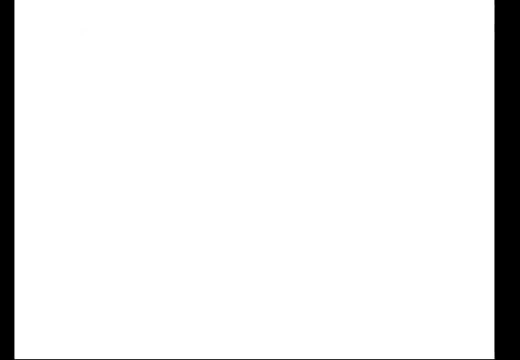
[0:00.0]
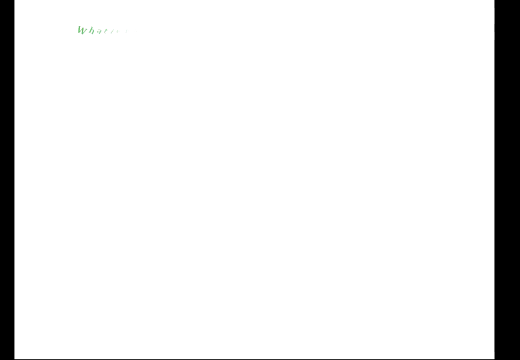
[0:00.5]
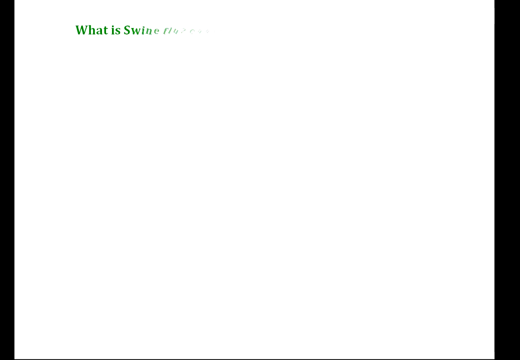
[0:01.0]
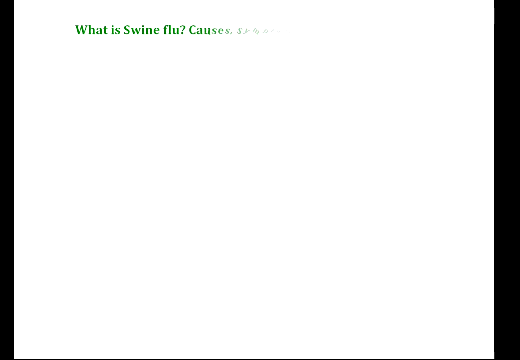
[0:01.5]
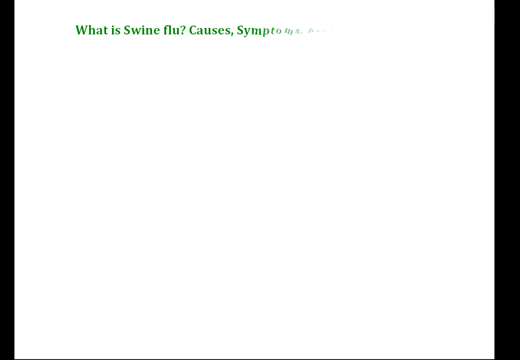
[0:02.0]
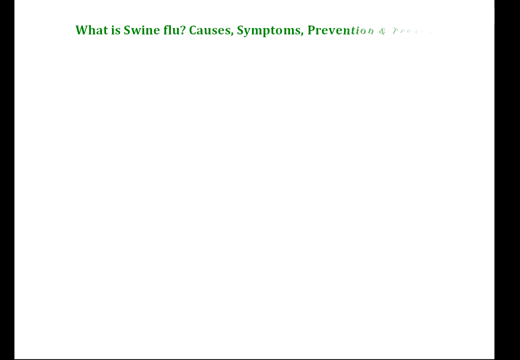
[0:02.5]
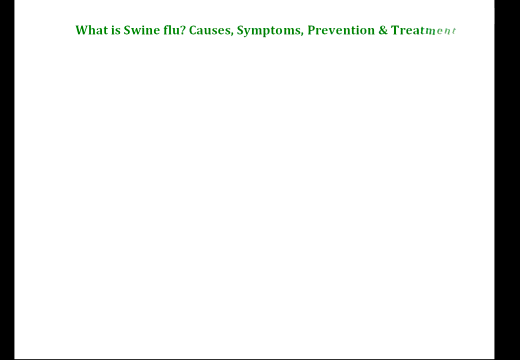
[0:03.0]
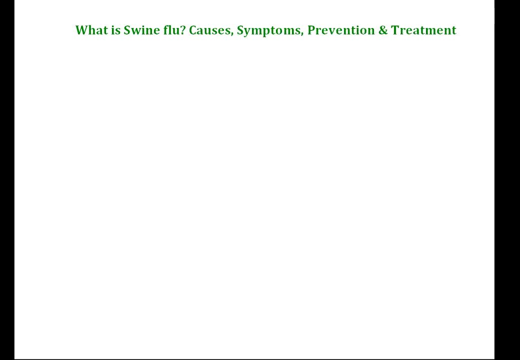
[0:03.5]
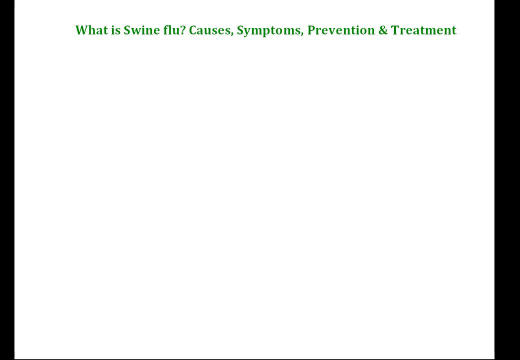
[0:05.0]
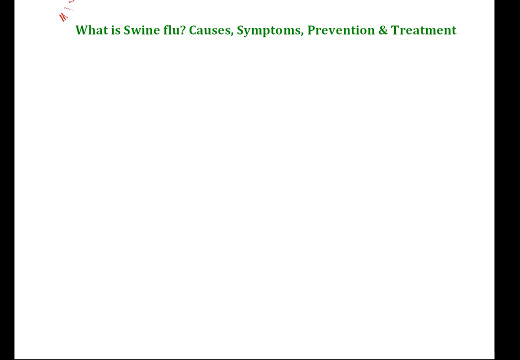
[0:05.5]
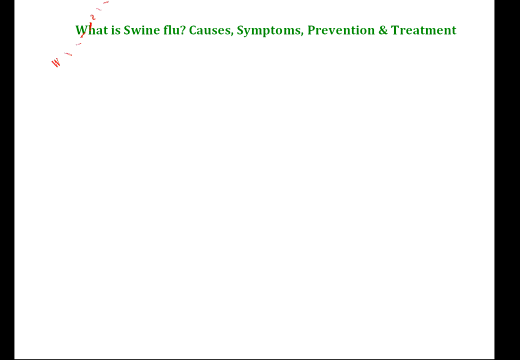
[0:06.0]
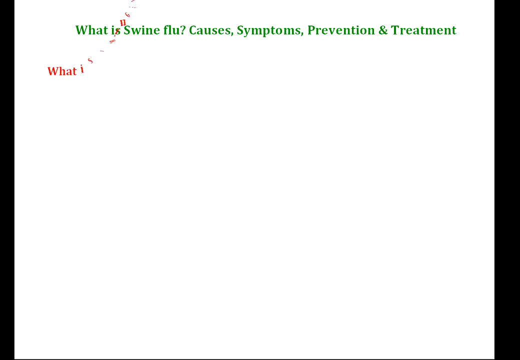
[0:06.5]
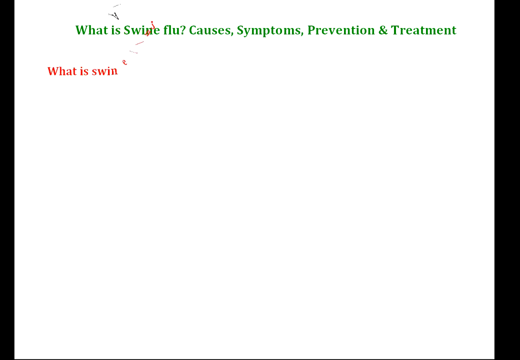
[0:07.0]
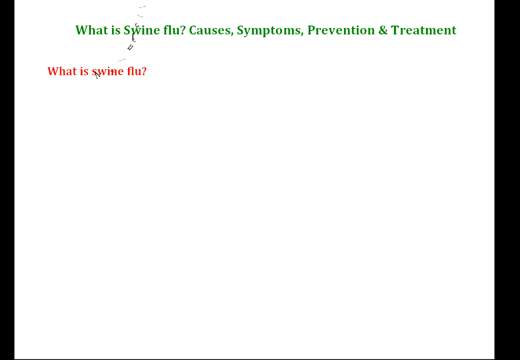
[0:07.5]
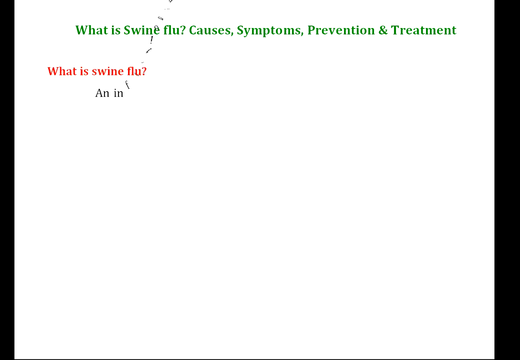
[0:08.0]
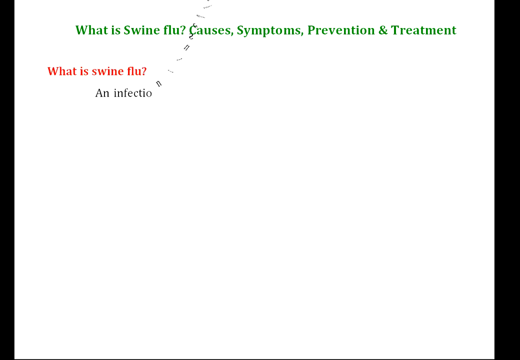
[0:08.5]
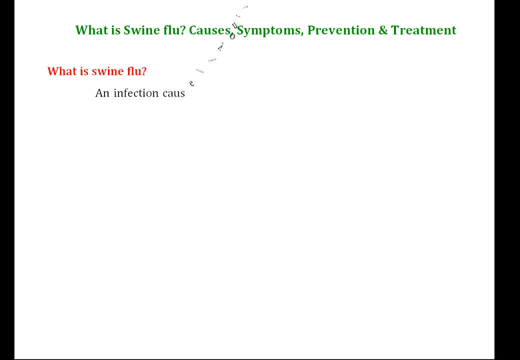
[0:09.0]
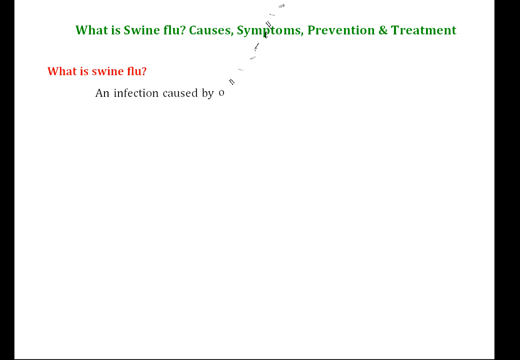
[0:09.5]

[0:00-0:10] A blank white screen appears, and text is added to it gradually, letter by letter. First, the words "What is swine flu? Causes, symptoms, prevention, and treatment" appear at the top of the screen in green text. Next, a question in red text reads "What is swine flu?" Then the definition of swine flu begins to be added in black text, starting with "infection caused by one of the", and more text is still being added as the shot ends.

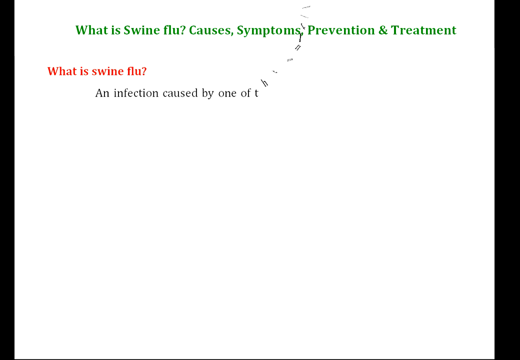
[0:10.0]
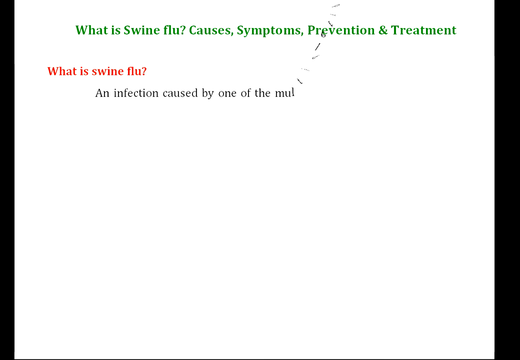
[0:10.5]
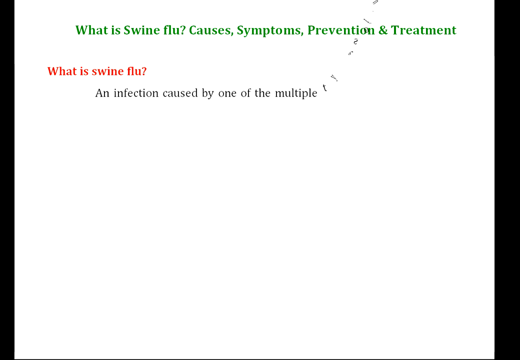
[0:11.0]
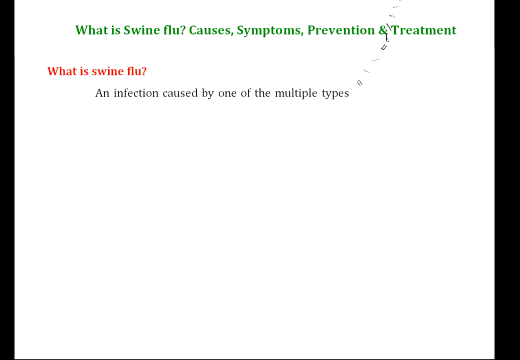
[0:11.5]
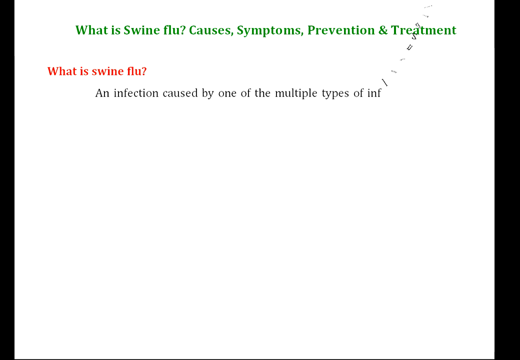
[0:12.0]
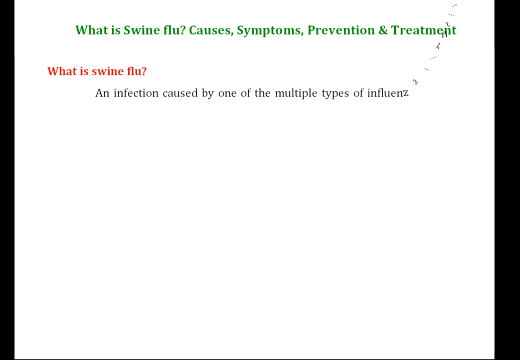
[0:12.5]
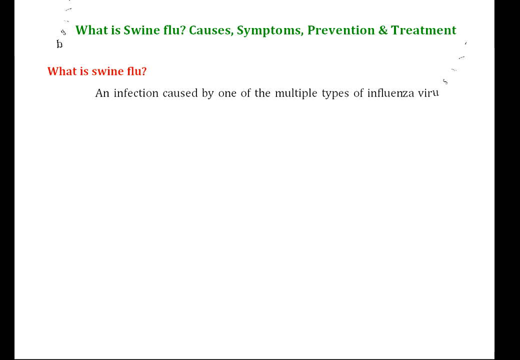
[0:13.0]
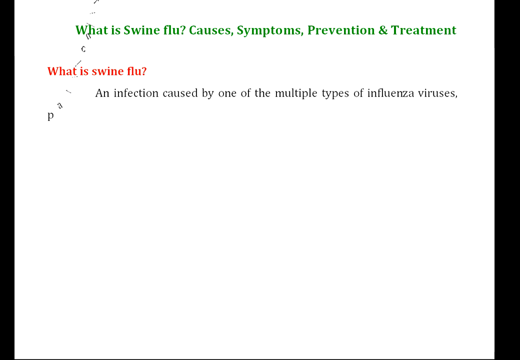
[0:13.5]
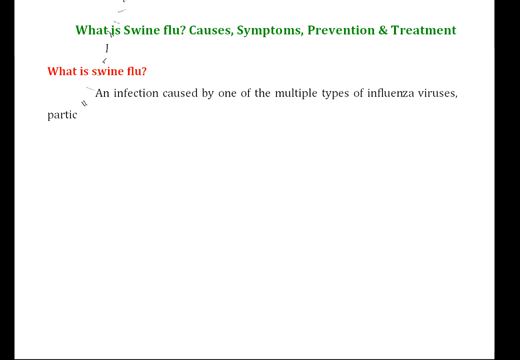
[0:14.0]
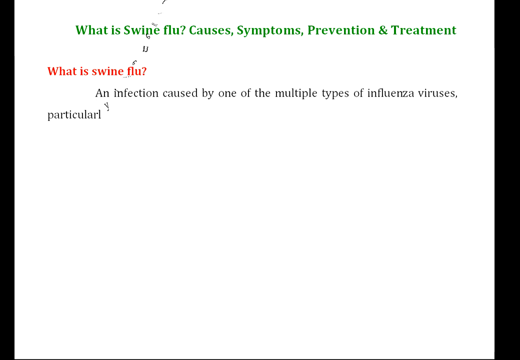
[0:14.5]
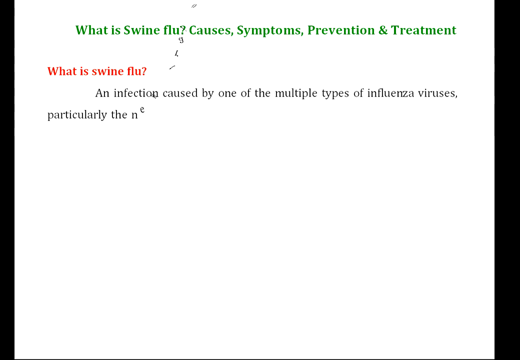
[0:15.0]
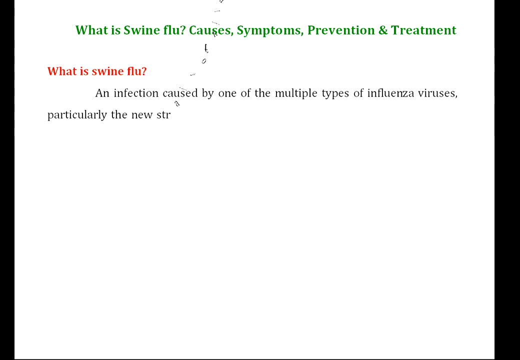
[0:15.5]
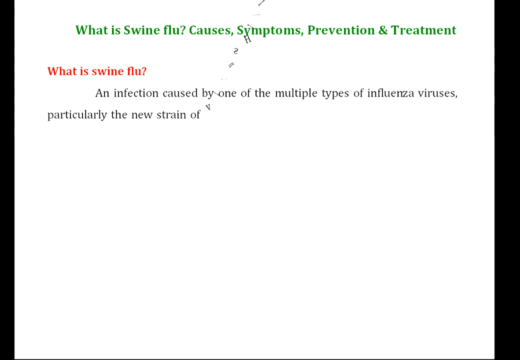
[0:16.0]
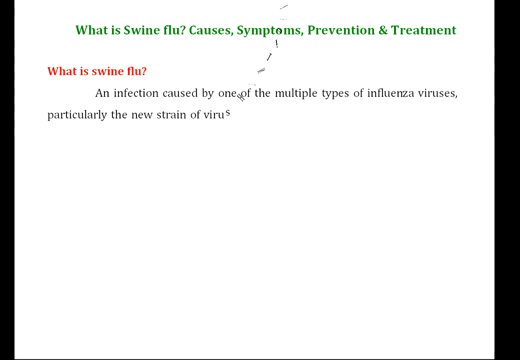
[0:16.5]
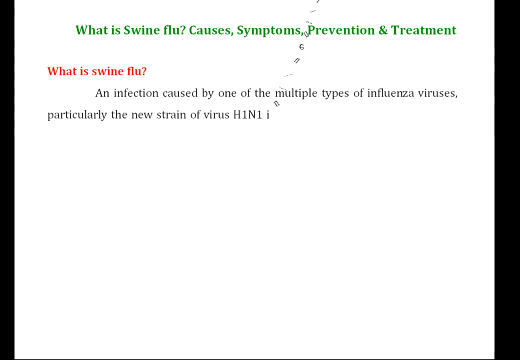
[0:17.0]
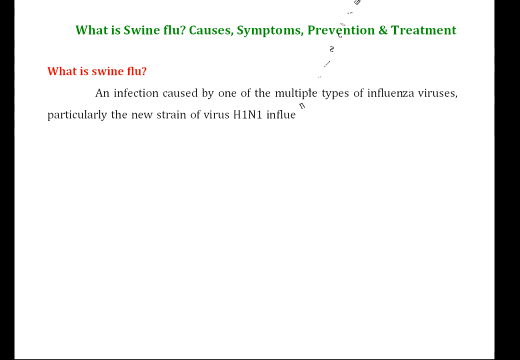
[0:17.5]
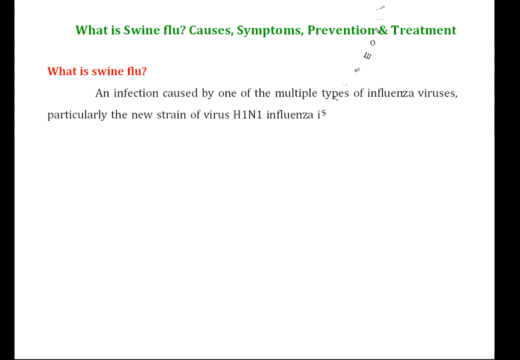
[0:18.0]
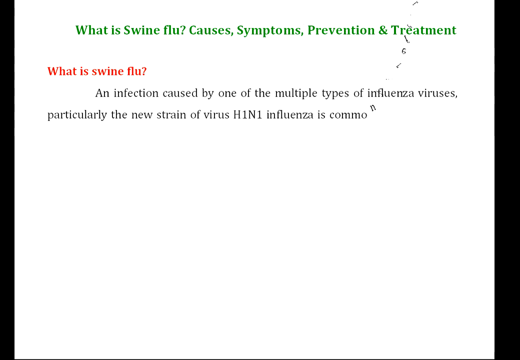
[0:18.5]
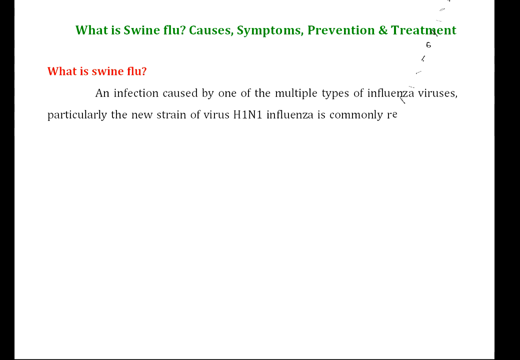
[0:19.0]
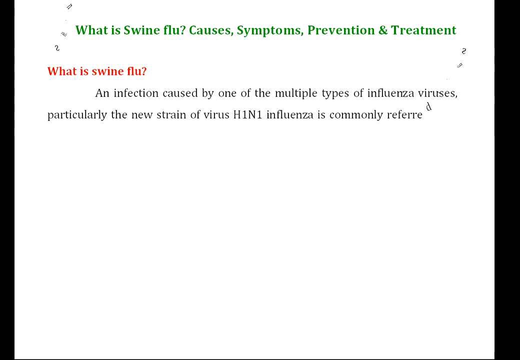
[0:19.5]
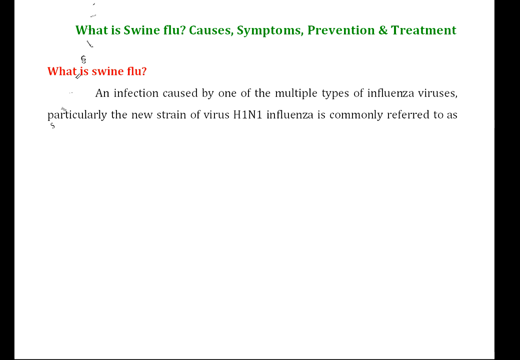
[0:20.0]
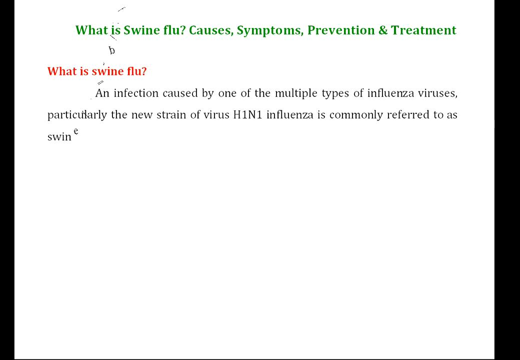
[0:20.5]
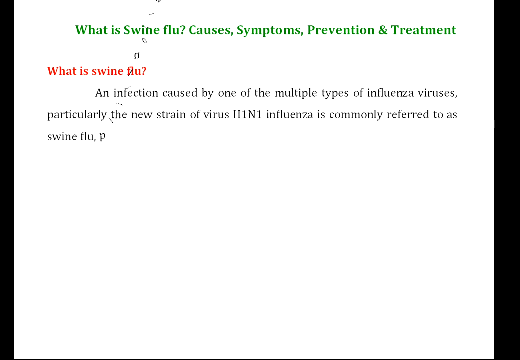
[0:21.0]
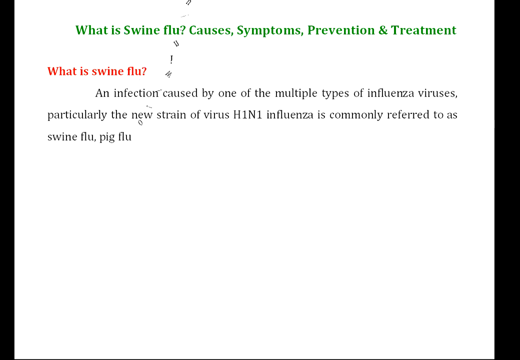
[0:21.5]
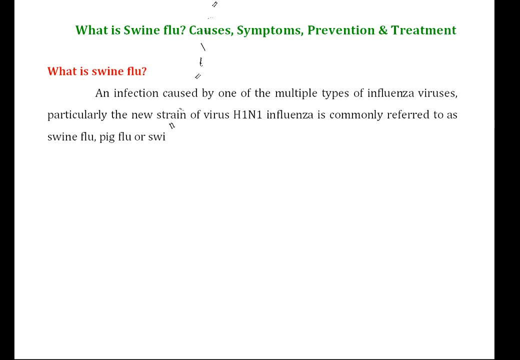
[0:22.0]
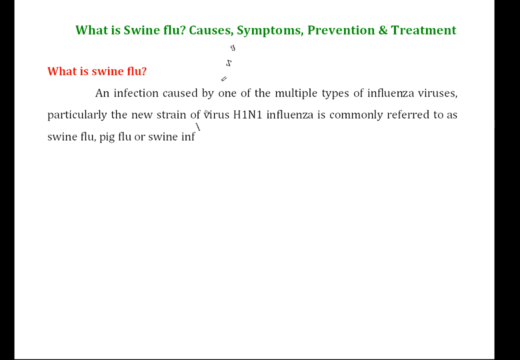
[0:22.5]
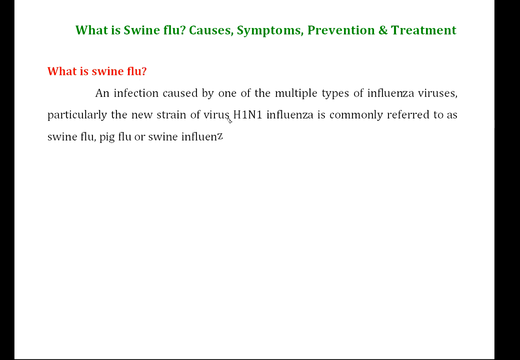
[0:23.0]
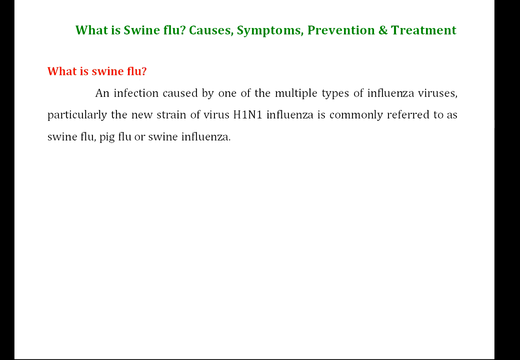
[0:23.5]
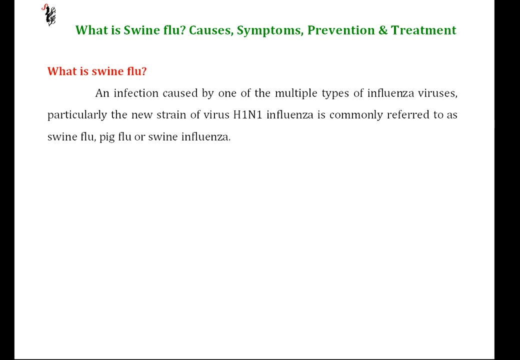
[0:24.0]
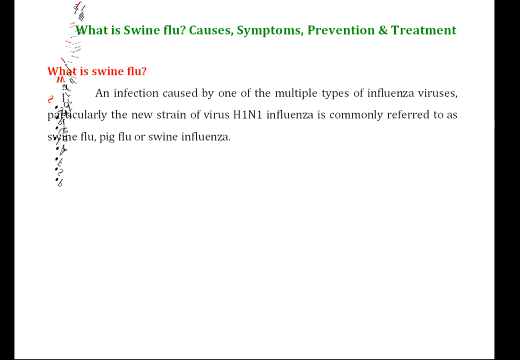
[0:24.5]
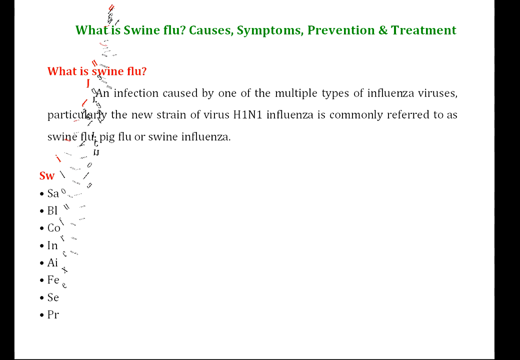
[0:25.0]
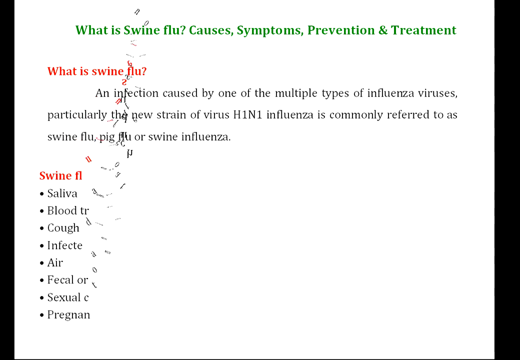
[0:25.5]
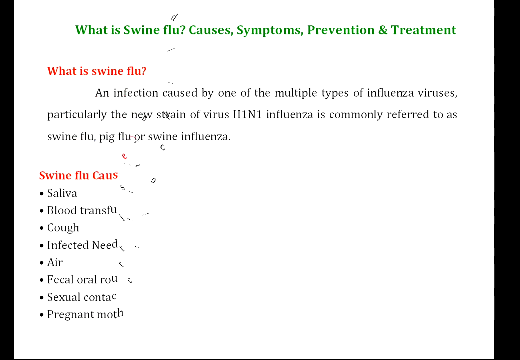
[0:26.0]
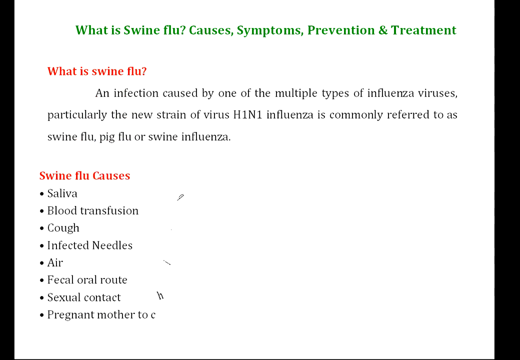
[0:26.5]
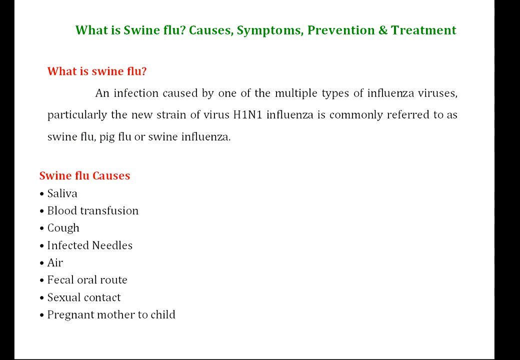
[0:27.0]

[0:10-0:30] The screen is white. At the top, a green header reads "What is Swine Flu? Causes, Symptoms, Prevention, and Treatment." Below it, a question in red reads "What is swine flu?" The definition of swine flu is added to the screen one letter at a time, as if the letters are dropping from the top of the screen. The completed definition reads "An infection caused by one of the multiple types of influenza viruses particularly the new strain of virus H1N1 influenza is commonly referred to as swine flu, pig flu, or swine influenza." Below that, a header reads "swine flu causes", followed by bulleted causes: saliva, blood transfusion, cough, infected needles, air, fecal oral route, sexual contact, or pregnant mother to child.